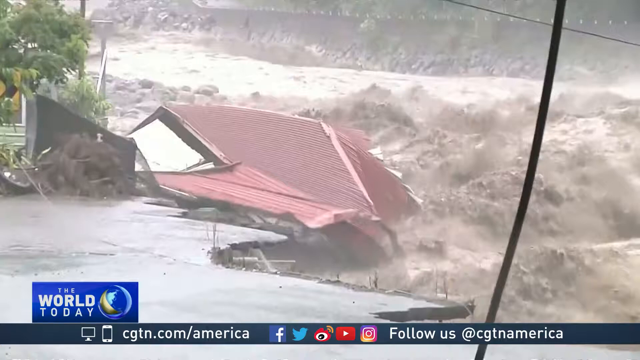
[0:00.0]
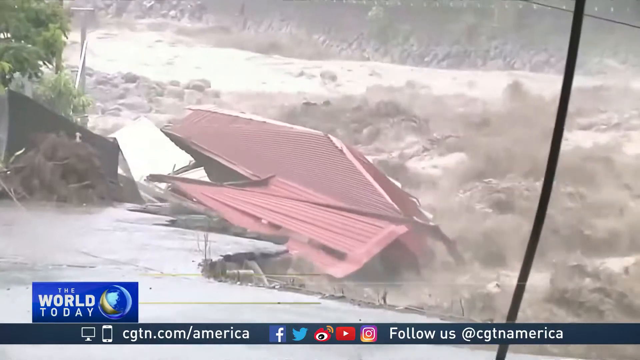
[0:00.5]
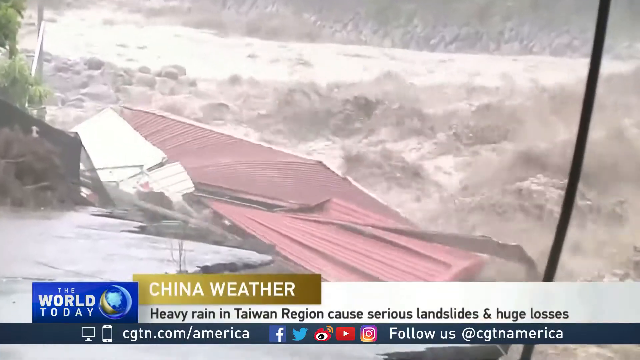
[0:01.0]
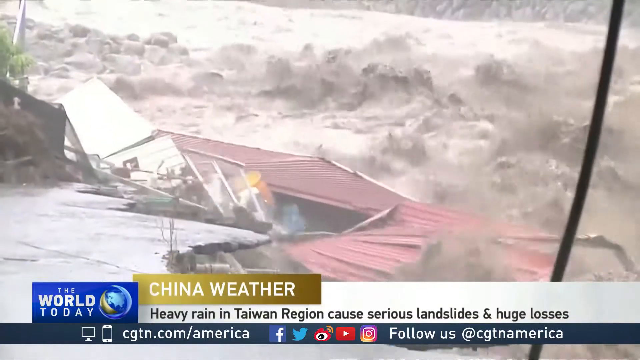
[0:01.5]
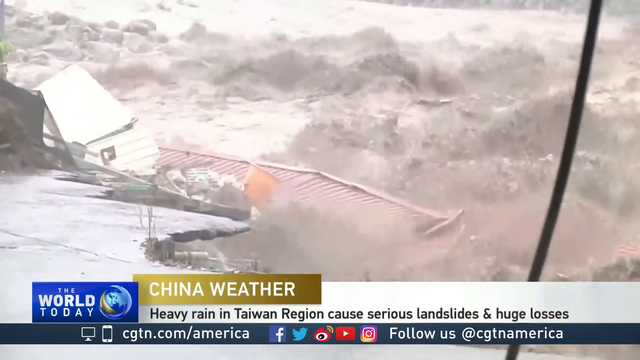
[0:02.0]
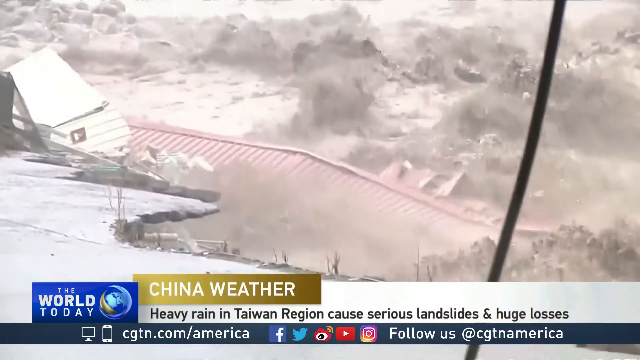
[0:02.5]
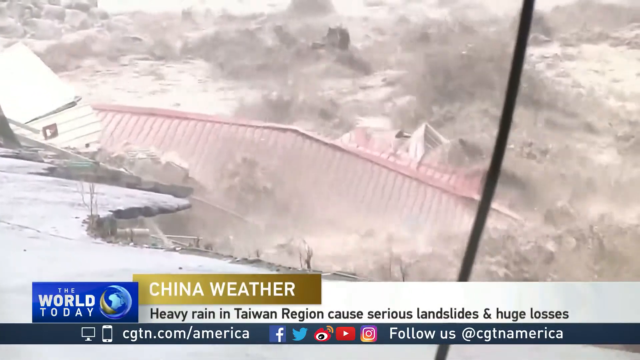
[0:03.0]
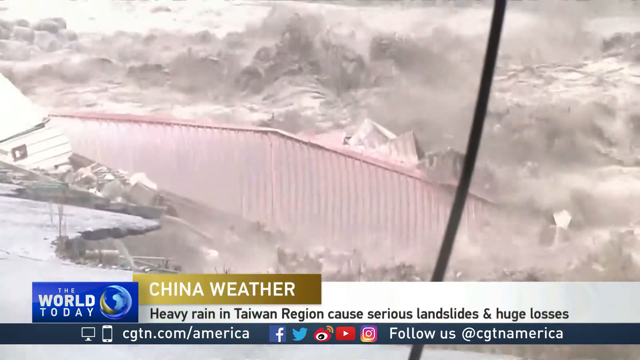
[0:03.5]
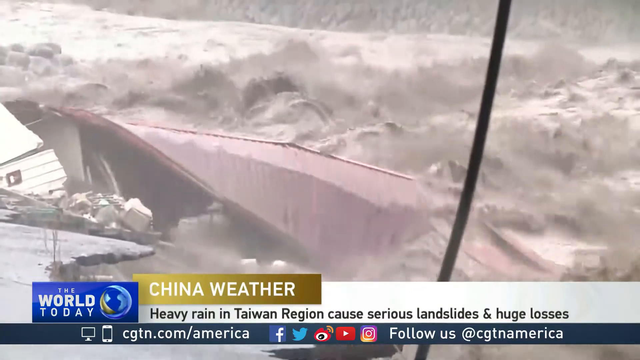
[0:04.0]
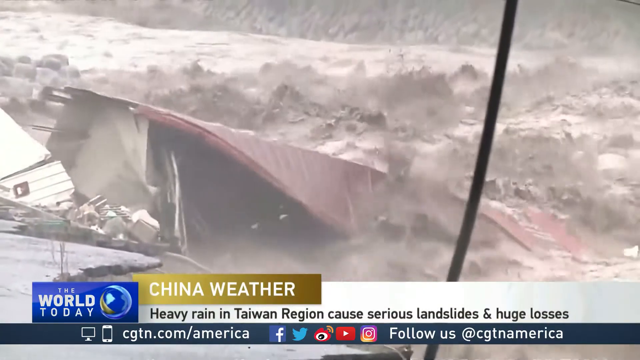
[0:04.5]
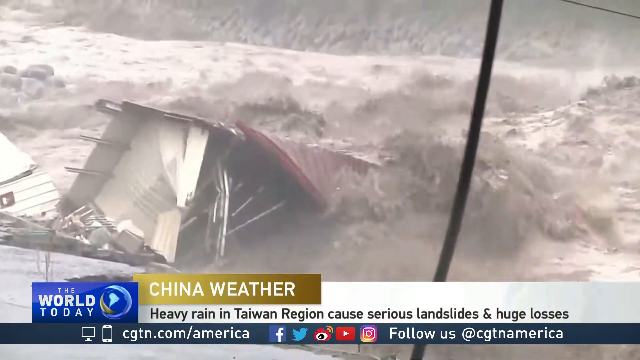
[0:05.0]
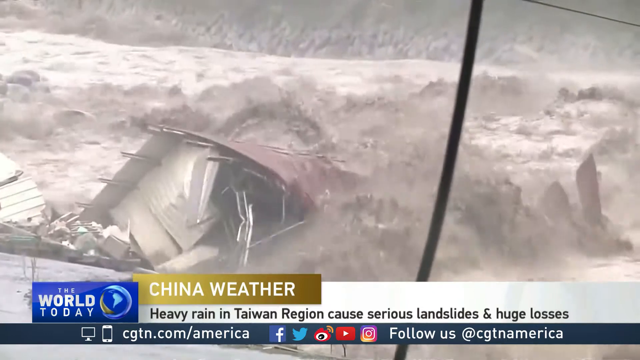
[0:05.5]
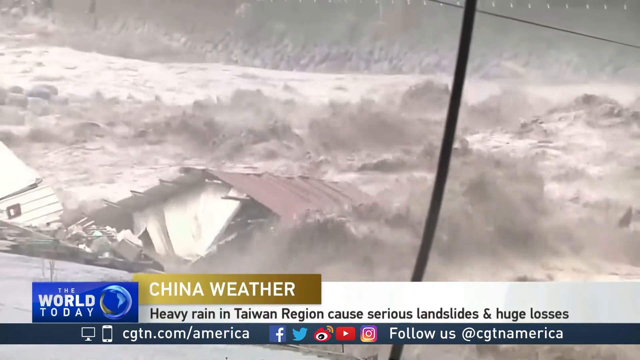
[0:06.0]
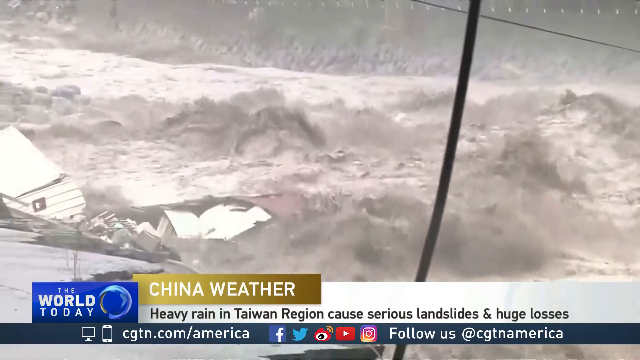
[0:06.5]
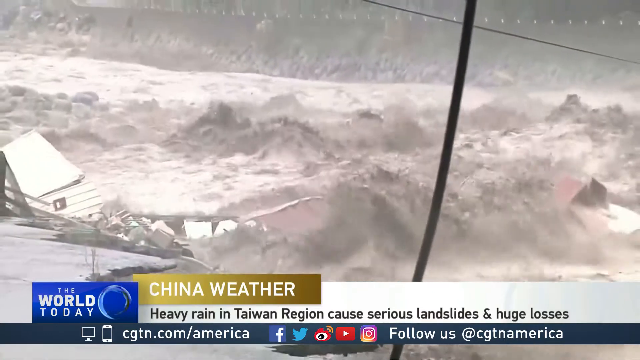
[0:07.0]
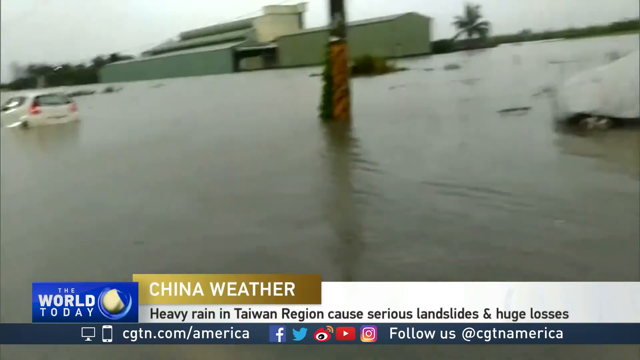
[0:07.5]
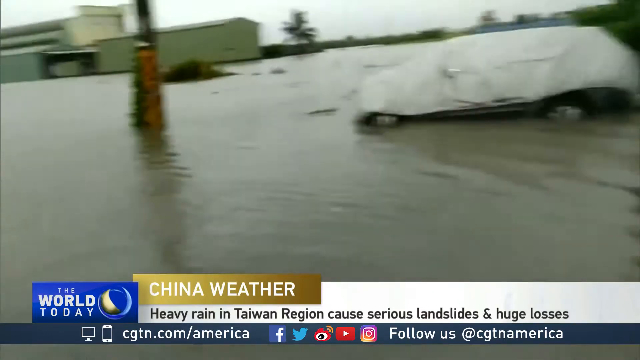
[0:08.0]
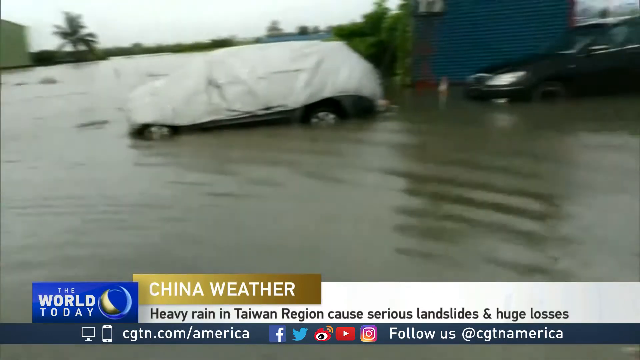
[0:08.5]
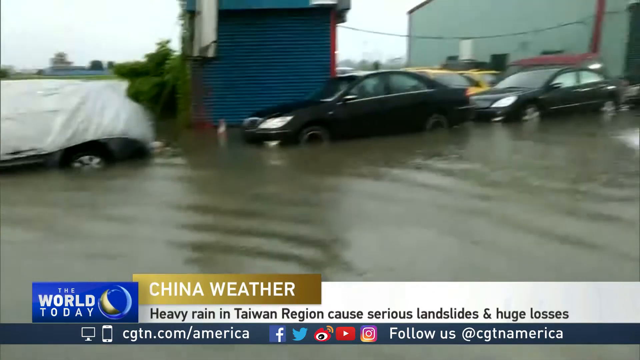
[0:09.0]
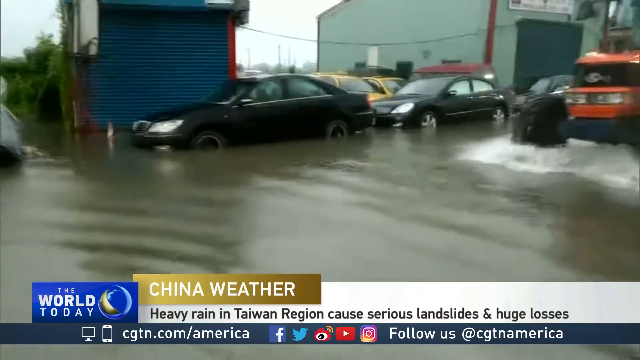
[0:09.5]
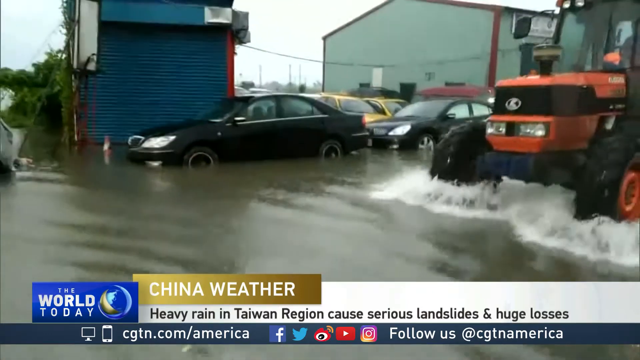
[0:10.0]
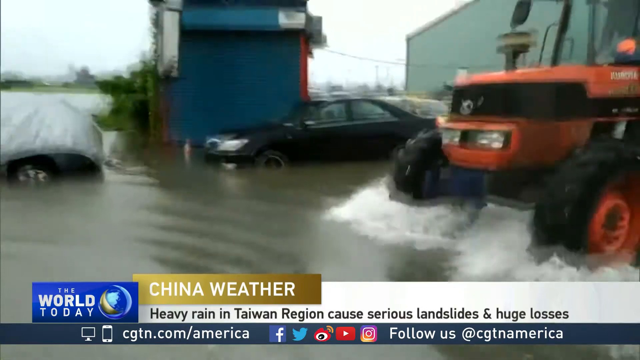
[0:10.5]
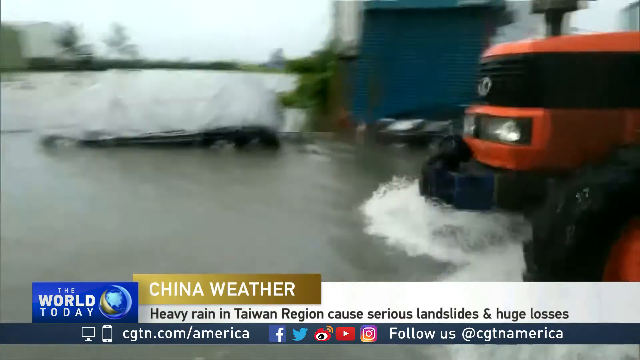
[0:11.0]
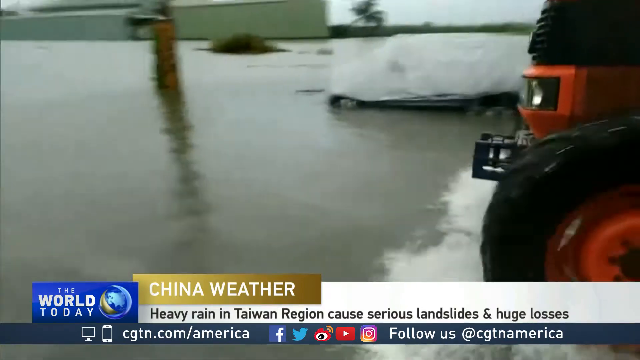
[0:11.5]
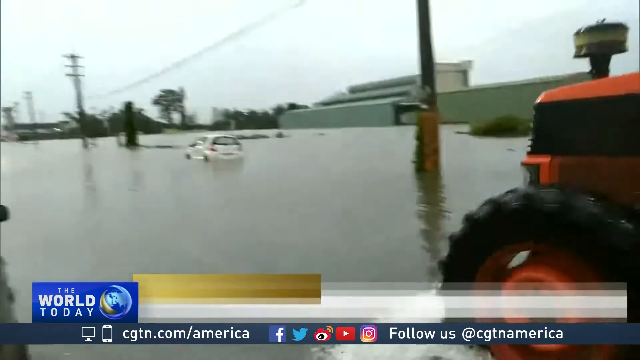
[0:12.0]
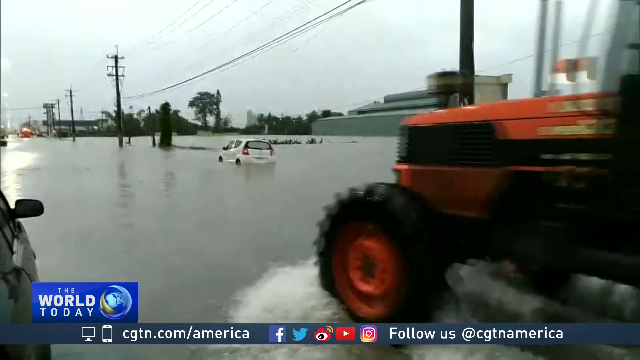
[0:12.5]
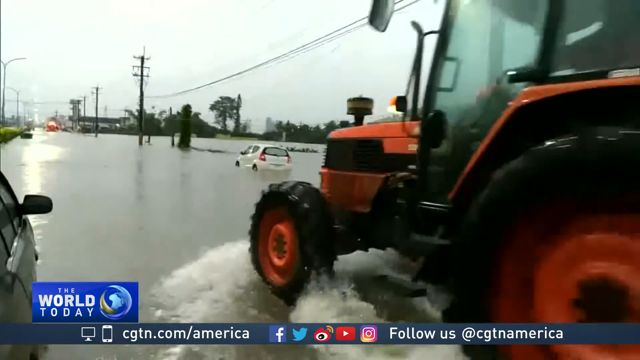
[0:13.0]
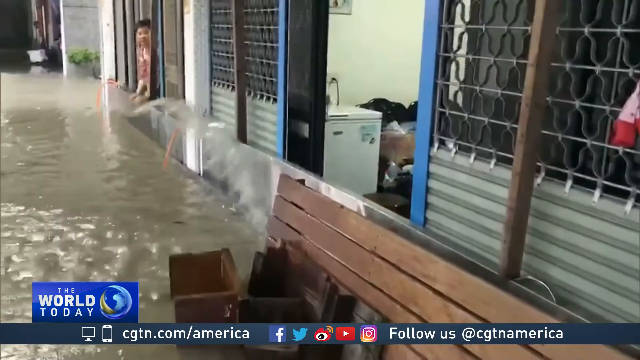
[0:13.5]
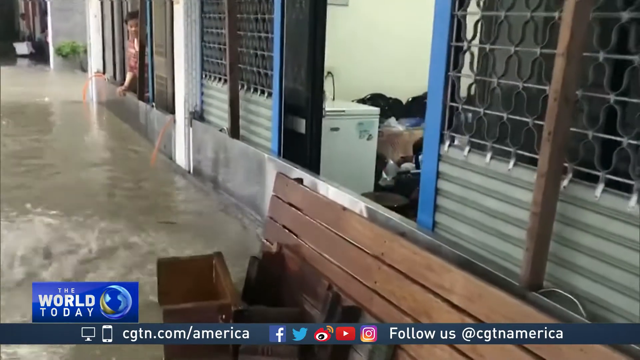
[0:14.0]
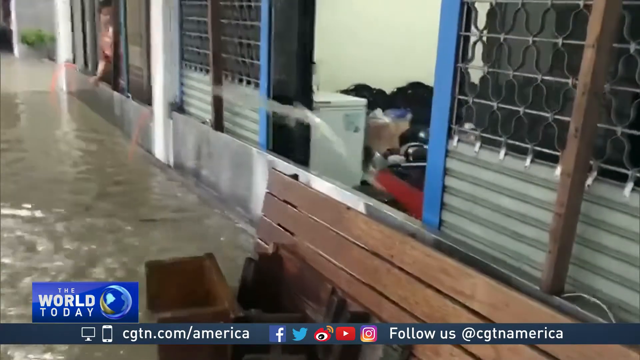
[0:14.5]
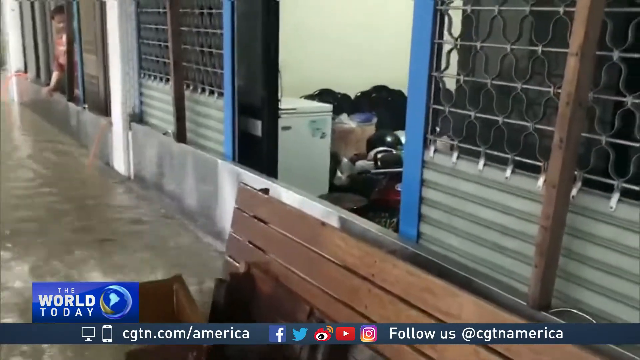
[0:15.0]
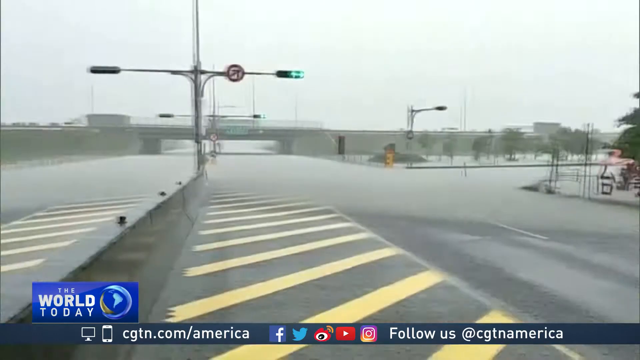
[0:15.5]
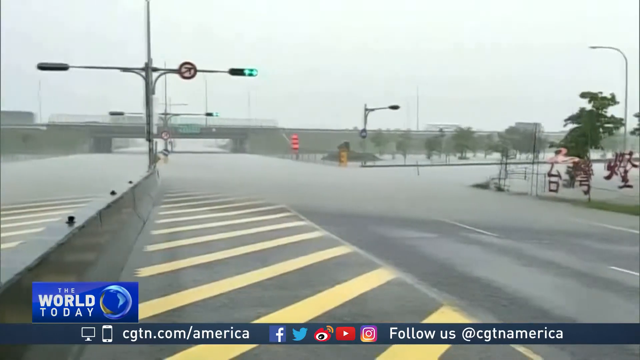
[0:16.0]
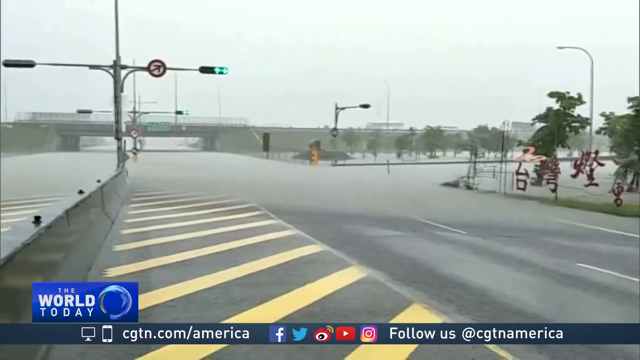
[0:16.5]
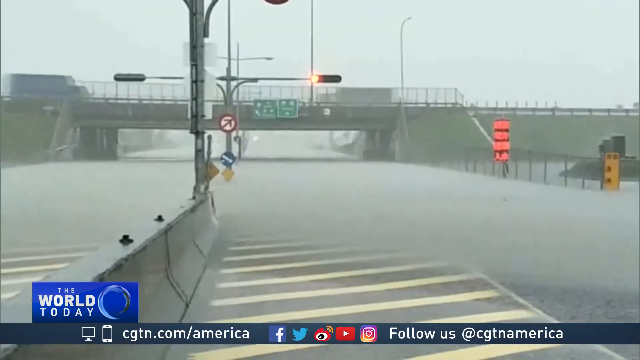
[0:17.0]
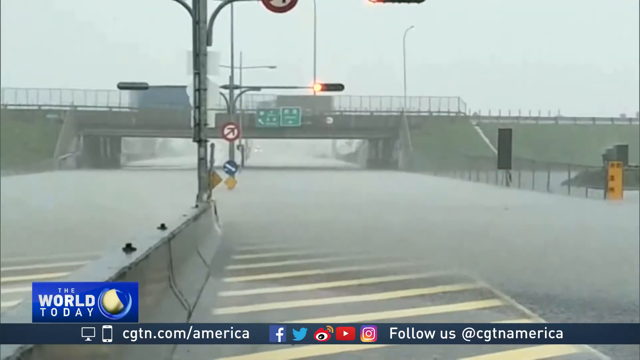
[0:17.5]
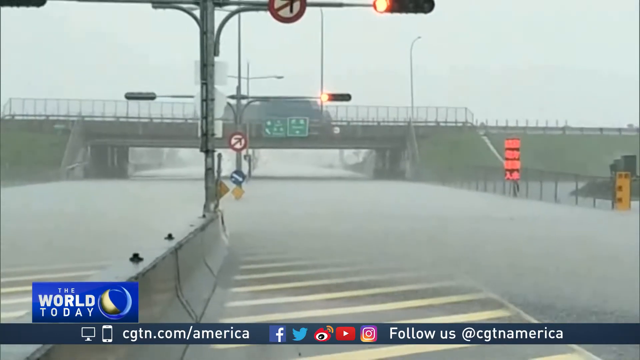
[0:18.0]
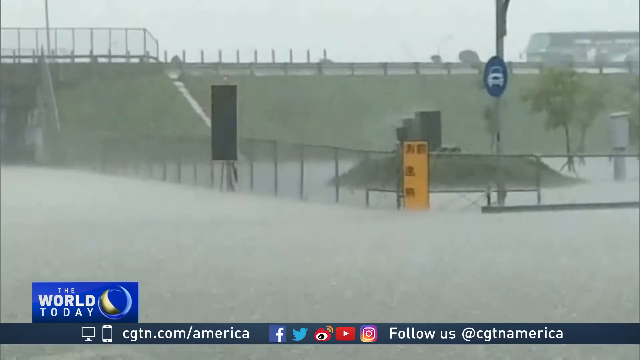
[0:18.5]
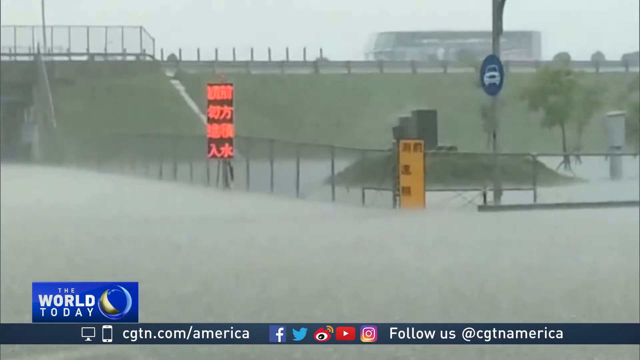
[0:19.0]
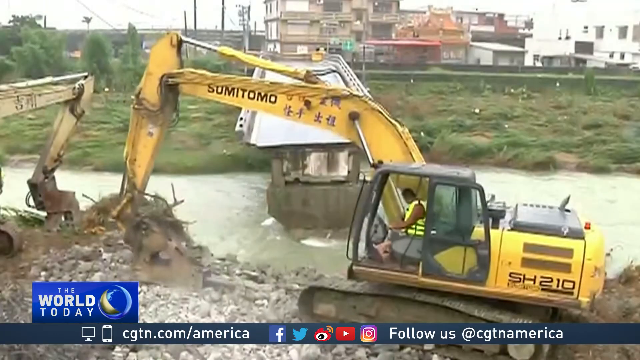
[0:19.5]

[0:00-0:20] What looks like a news report shows flooding, possibly from a hurricane. A red roof goes down rushing floodwaters. At the bottom of the screen, a headline reads "China weather" in white all caps on a gold text box, and beneath it, in black on a white banner, "heavy rain in Taiwan region caused serious landslides and huge losses." Below that is a blue banner with a website, social media icons and similar information. Just above it on the left is a blue rectangle reading "the world today," with "world" in bold all caps and a small rotating globe icon to its right. After the red roof goes downstream, many flooded vehicles appear in the floodwaters, and a large orange tractor kind of rolls through, apparently tall enough to get through the water. People then shovel what looks like water out of their storefront onto the street, with water coming out. Next, a roadway appears pretty flooded, while on the freeway overpass above there still seems to be traffic; there is what looks like a flashing light with red text in Chinese characters.